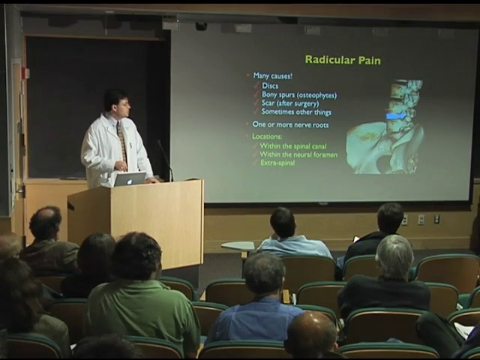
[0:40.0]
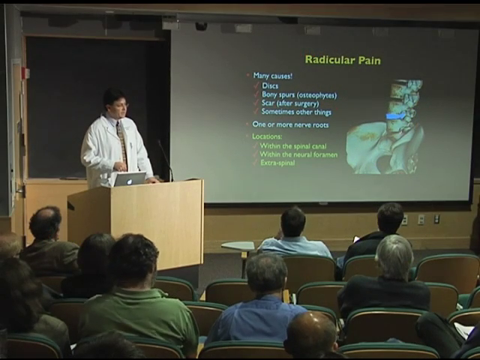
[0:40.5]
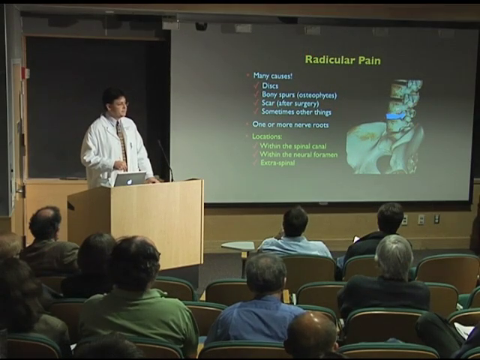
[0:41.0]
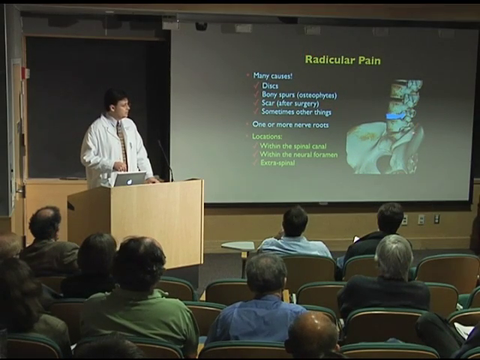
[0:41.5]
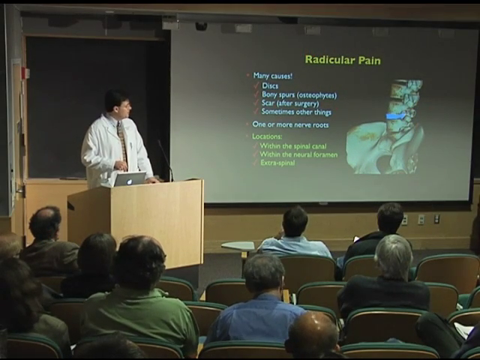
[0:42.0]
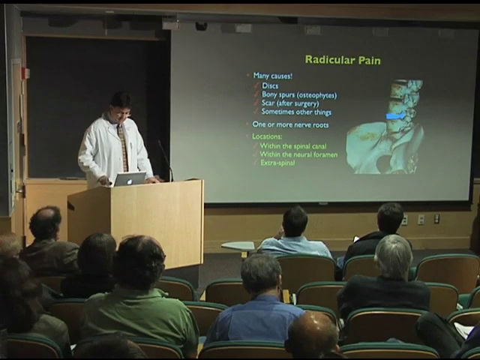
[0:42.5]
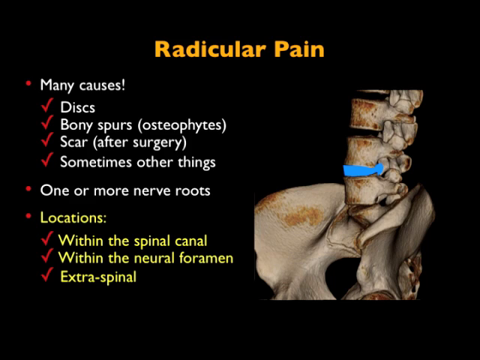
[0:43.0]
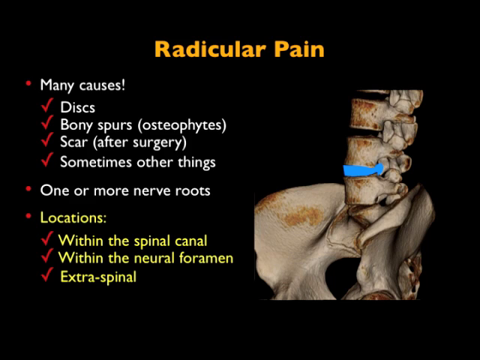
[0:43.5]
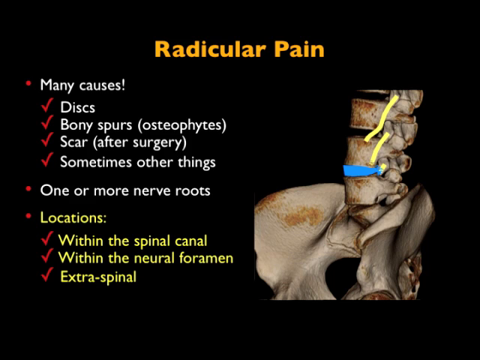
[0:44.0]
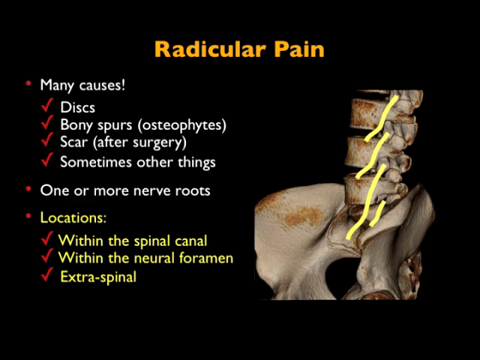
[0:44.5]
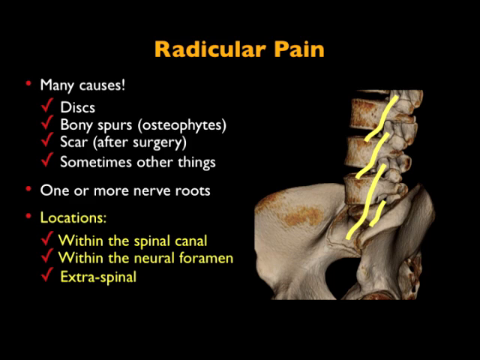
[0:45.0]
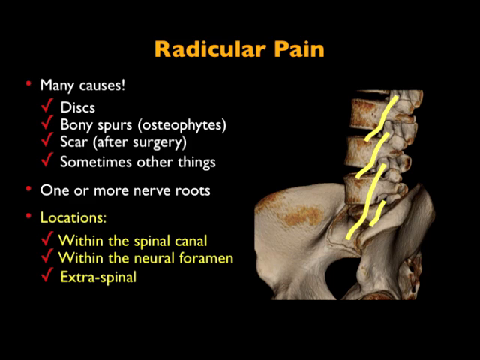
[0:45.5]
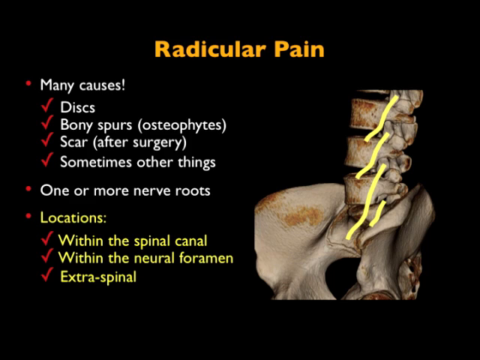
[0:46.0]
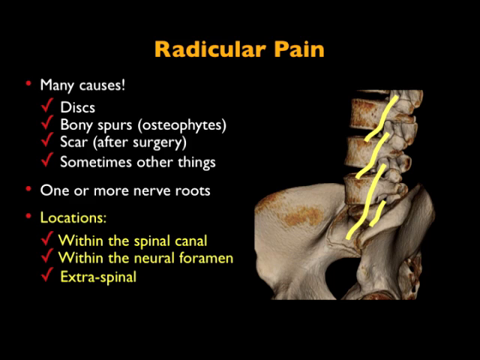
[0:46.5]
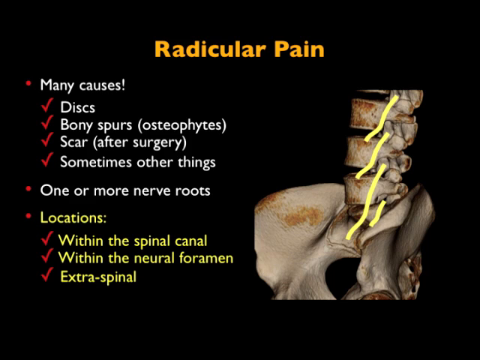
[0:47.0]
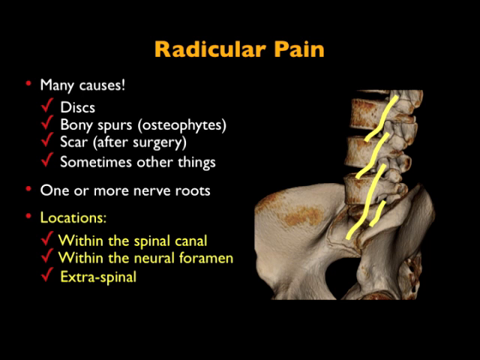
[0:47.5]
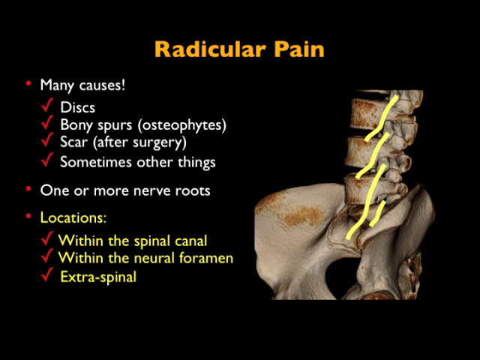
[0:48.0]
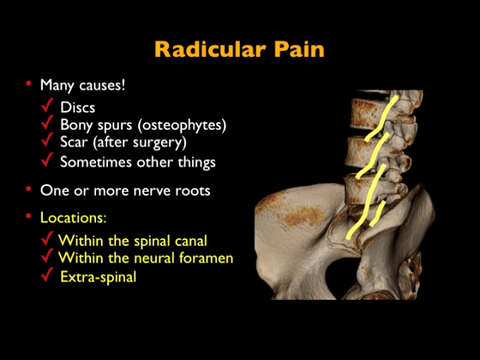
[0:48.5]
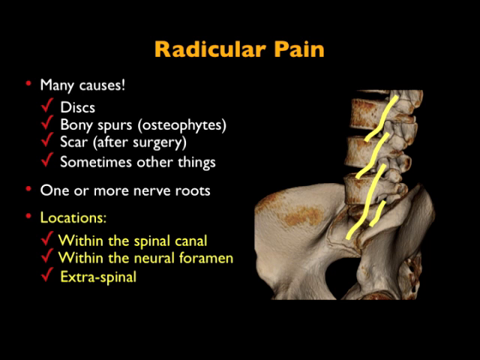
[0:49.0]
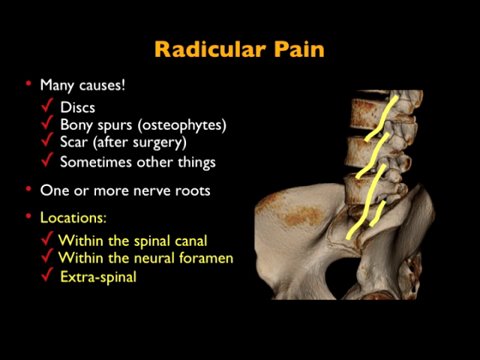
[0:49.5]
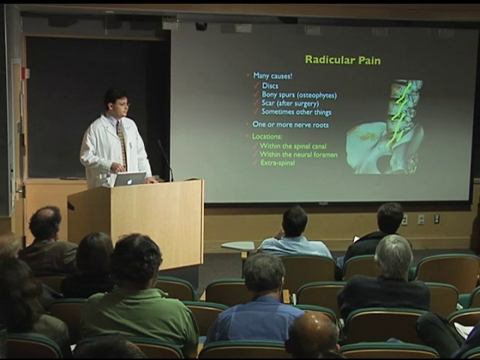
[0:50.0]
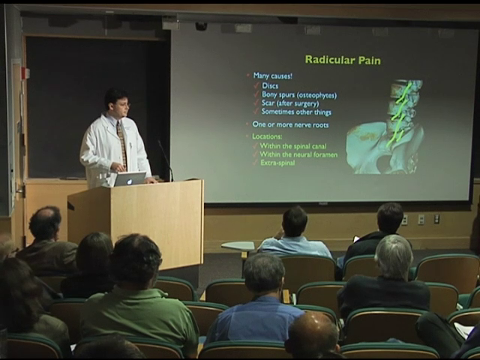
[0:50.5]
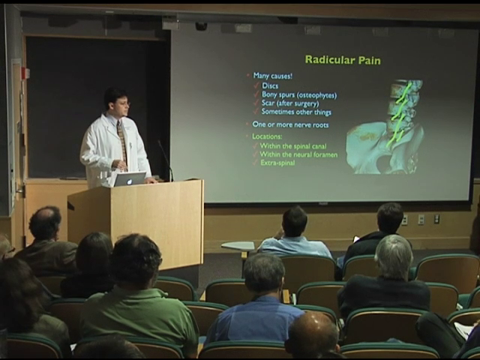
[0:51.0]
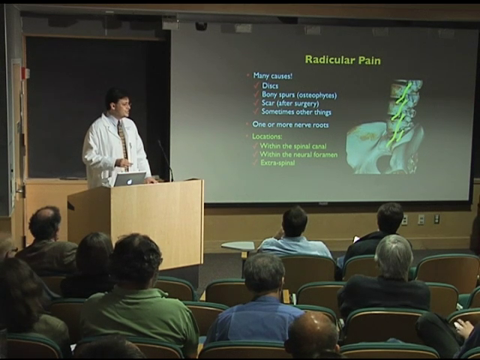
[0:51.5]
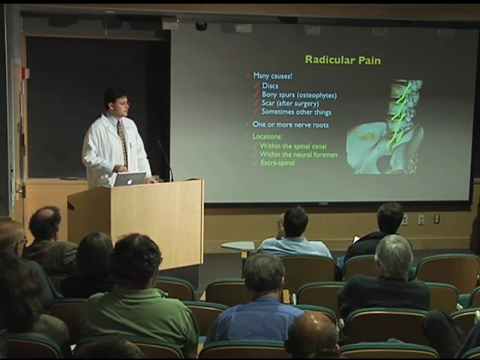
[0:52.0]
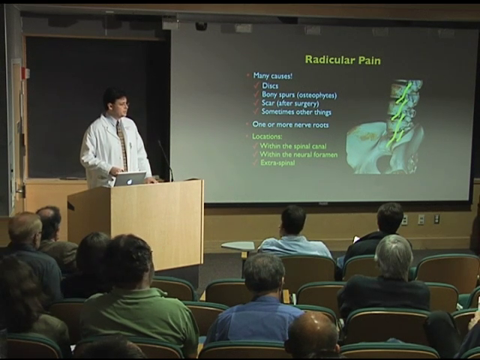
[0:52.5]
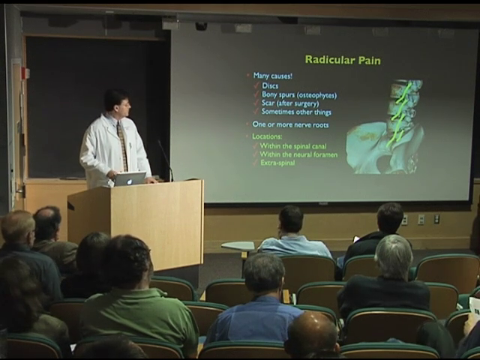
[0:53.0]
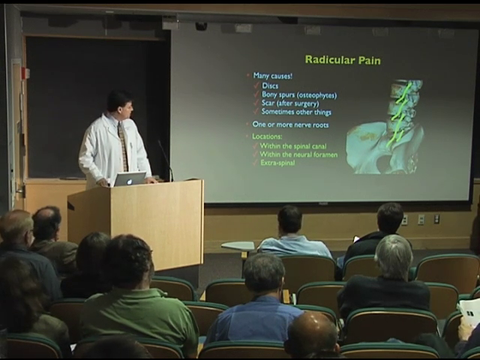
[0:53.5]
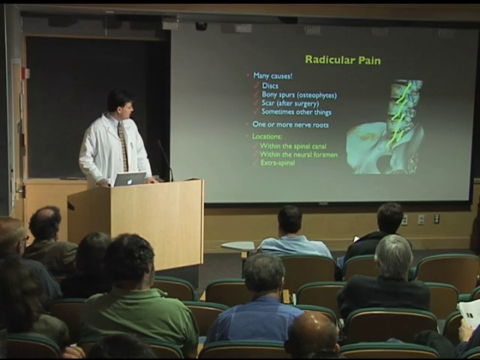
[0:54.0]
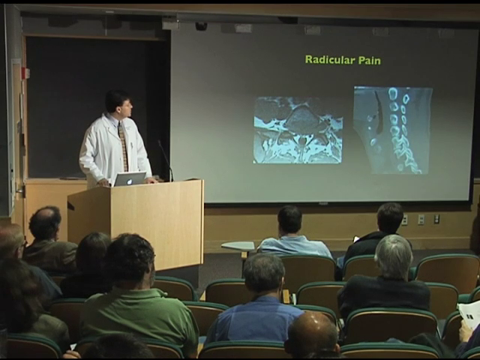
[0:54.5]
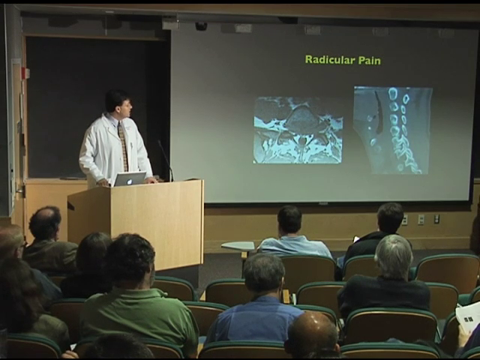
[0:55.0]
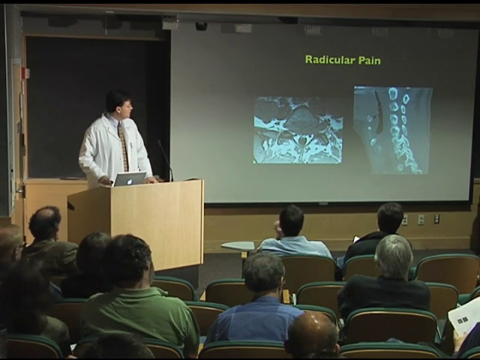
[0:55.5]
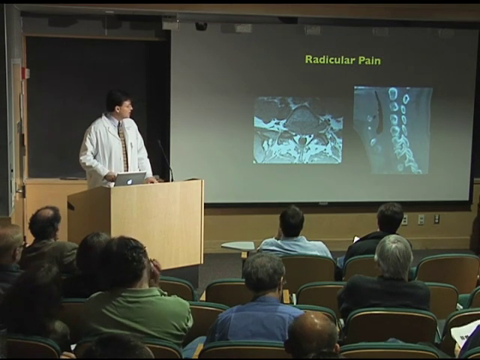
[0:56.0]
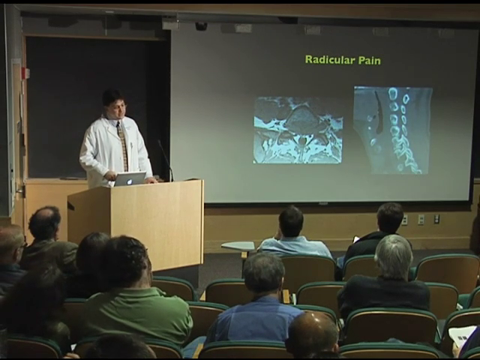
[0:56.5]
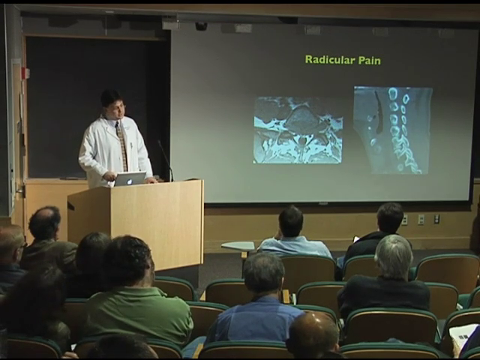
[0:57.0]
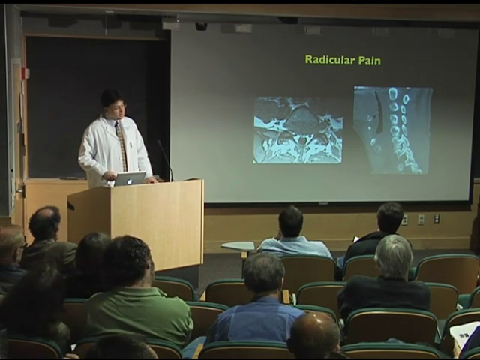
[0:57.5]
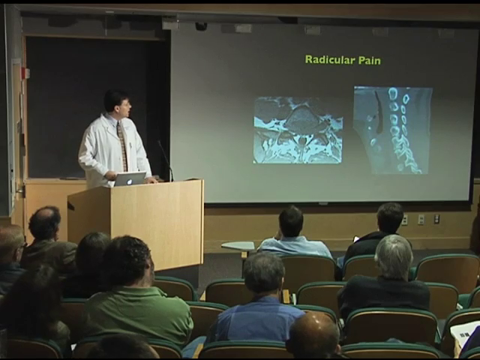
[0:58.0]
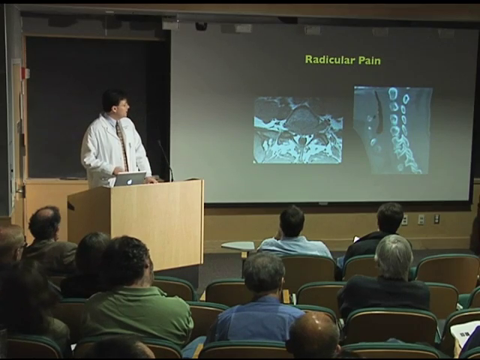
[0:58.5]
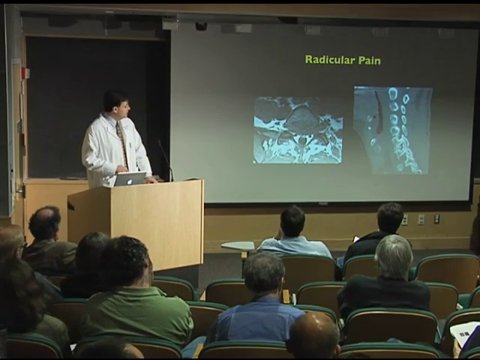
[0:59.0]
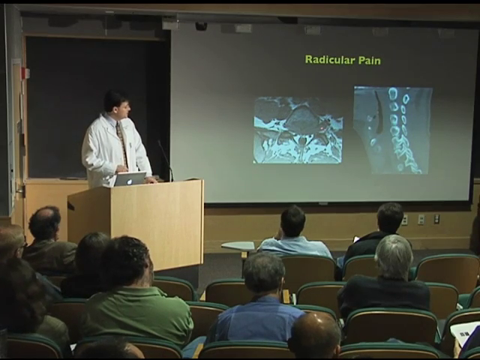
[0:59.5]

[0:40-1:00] Dr. Christopher P. Hess stands behind a podium delivering a presentation to an audience full of people sitting in chairs in the foreground. He is a heavyset man with short black hair and glasses, wearing a white lab coat, a gray button-up shirt, and a gold and black striped necktie. To his right is a large projector screen with the title "Radicular Pain." The screen shows an image of a damaged spine, with a blue arrow pointing to a specific spot on it. Text indicates that there are many causes of radicular pain, which include discs, bony spurs, scars, and sometimes other things, and that it can occur within the spinal cord and within the neural foramen. The video goes to the screen Dr. Hess is showing, and yellow wavy lines are drawn over the image of the damaged spine to highlight sections of it. The video then cuts back to a wide shot of Dr. Hess presenting in front of the audience as he continues to speak.